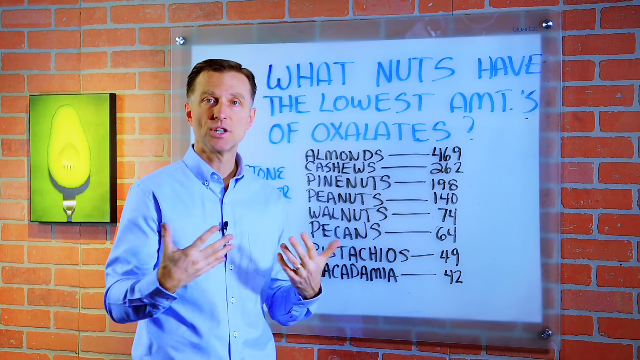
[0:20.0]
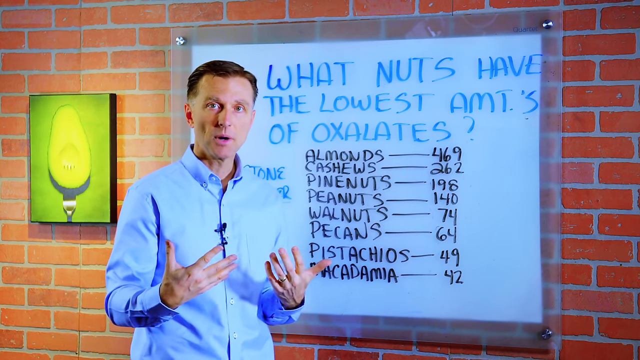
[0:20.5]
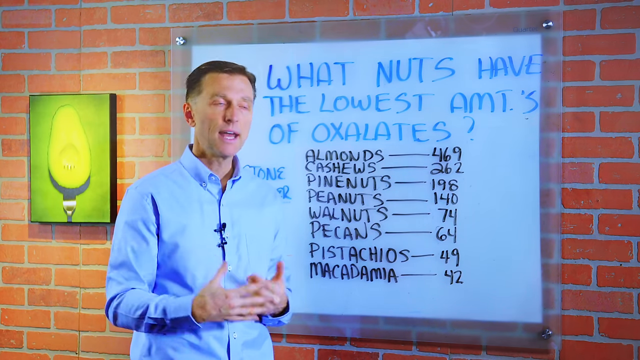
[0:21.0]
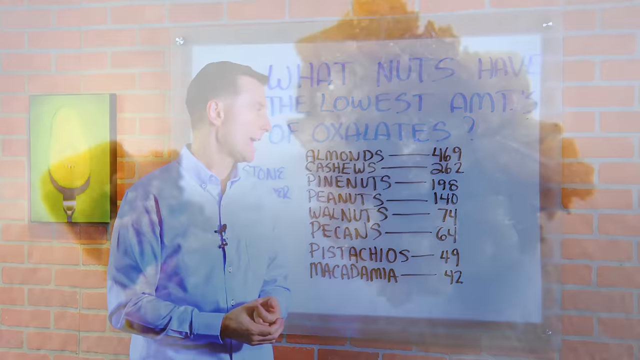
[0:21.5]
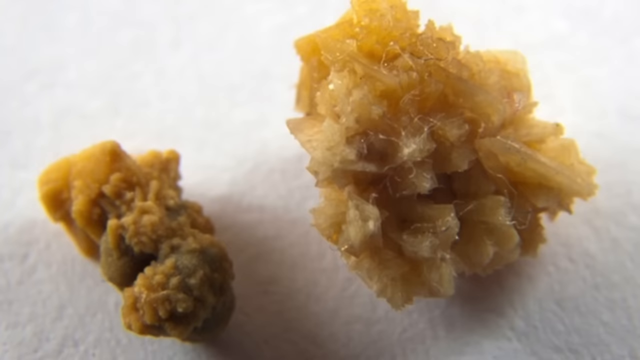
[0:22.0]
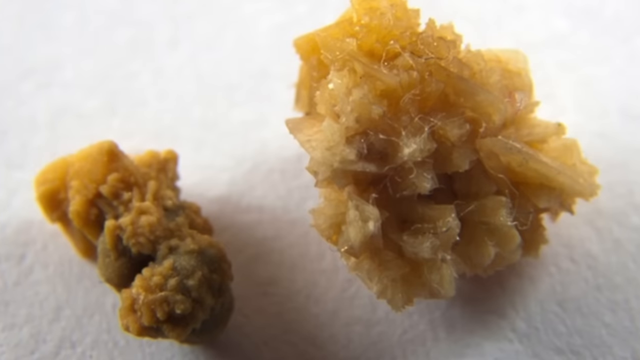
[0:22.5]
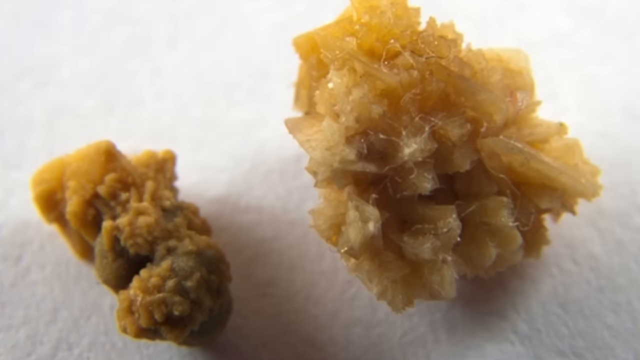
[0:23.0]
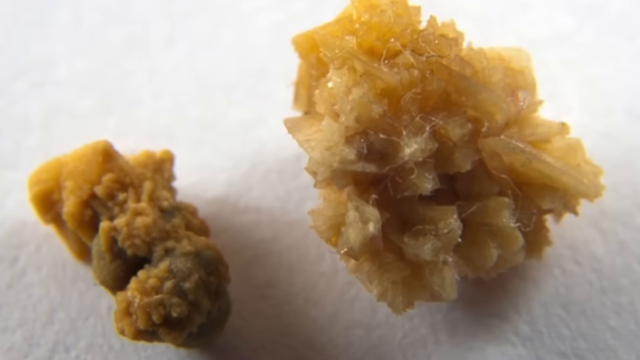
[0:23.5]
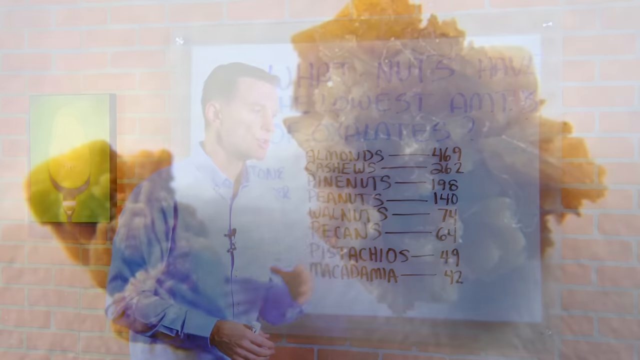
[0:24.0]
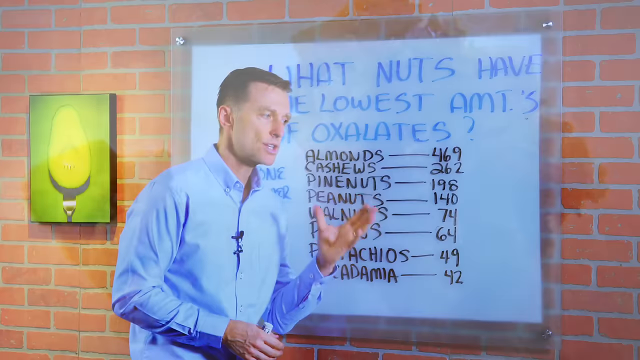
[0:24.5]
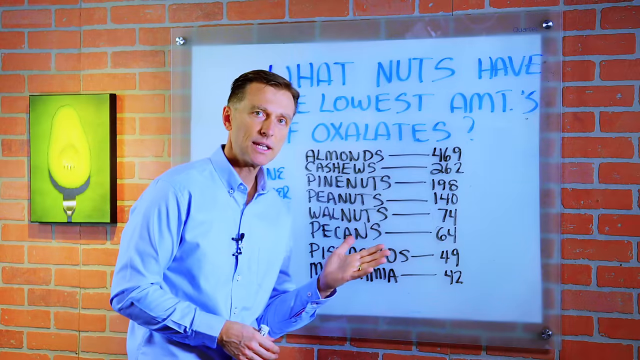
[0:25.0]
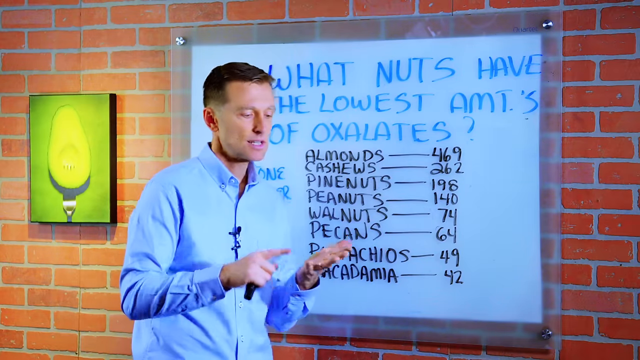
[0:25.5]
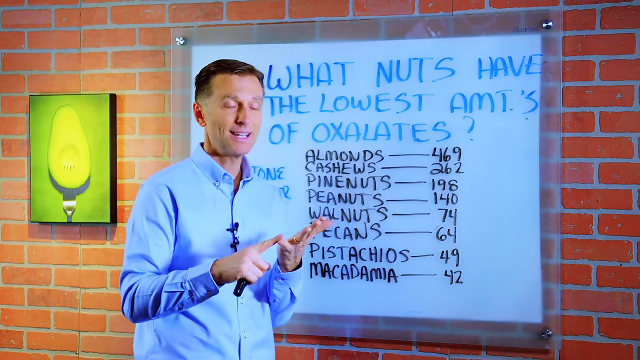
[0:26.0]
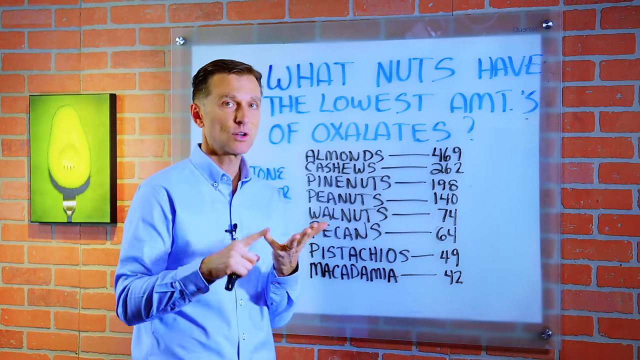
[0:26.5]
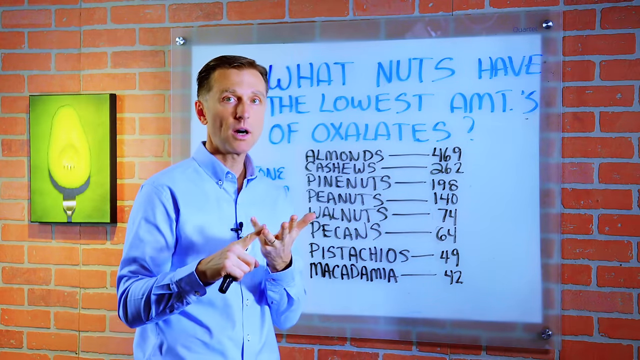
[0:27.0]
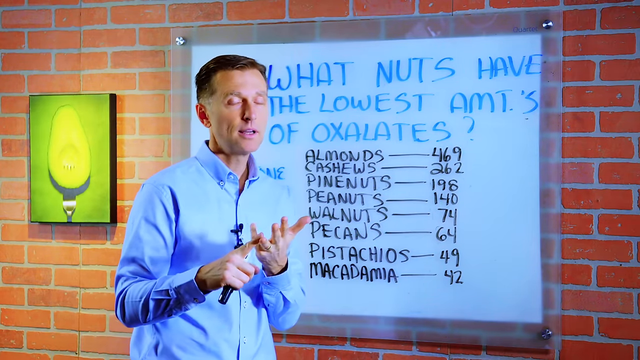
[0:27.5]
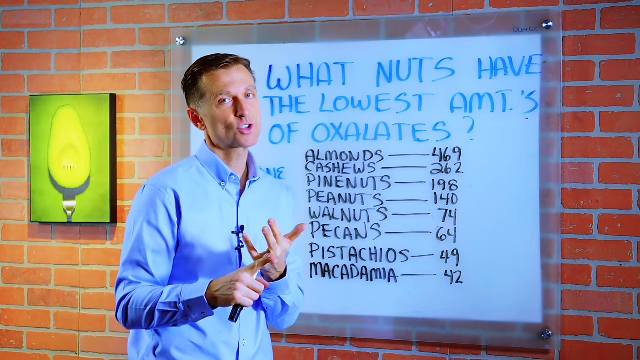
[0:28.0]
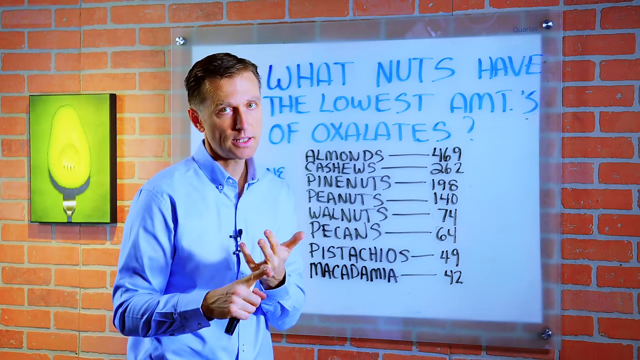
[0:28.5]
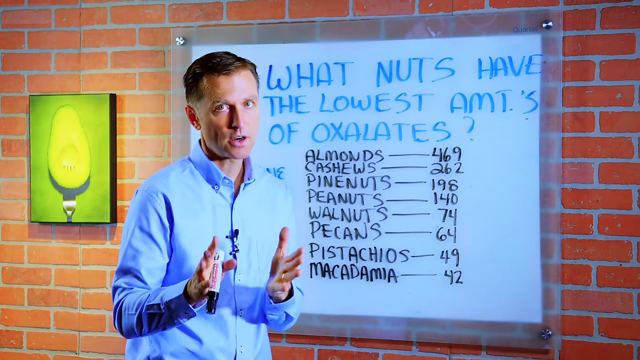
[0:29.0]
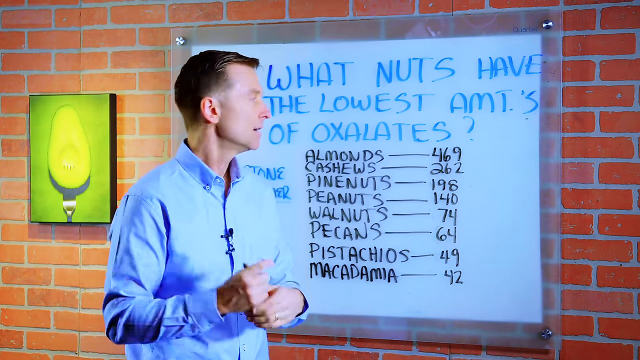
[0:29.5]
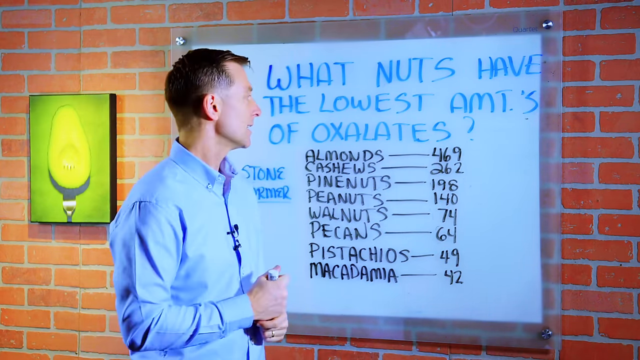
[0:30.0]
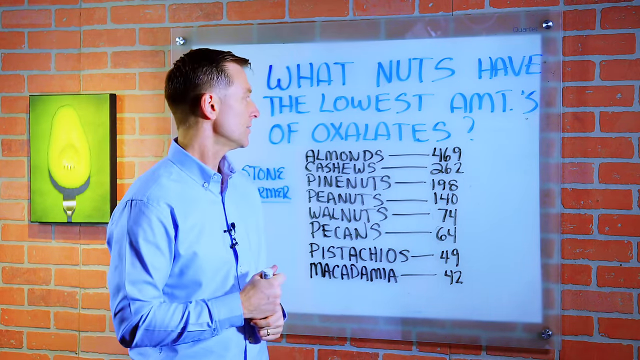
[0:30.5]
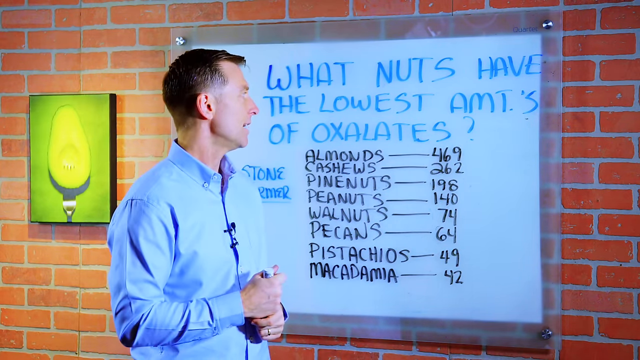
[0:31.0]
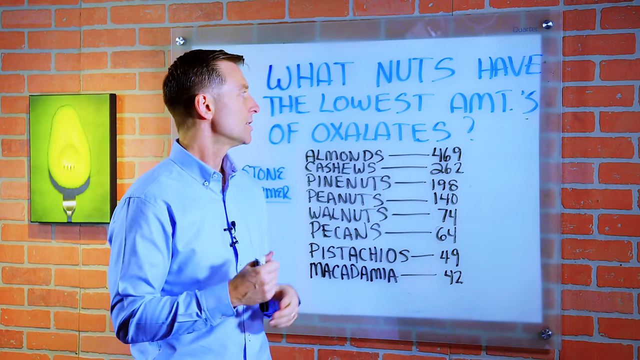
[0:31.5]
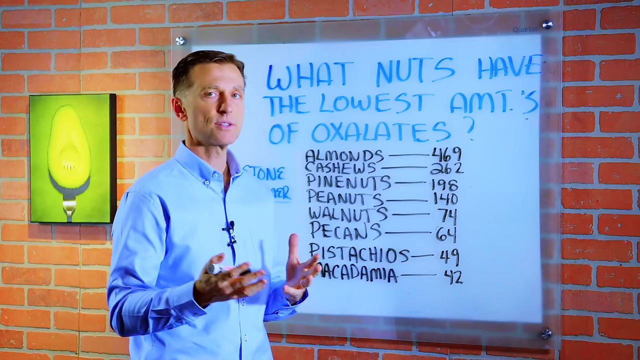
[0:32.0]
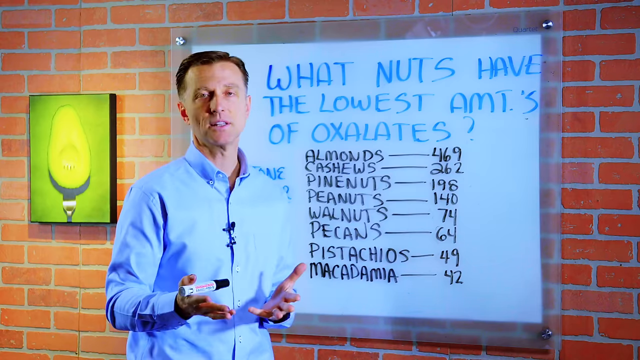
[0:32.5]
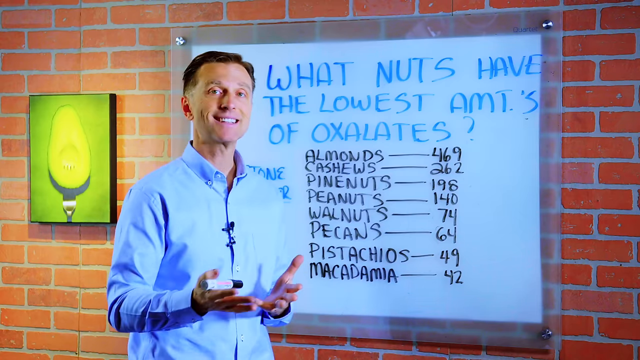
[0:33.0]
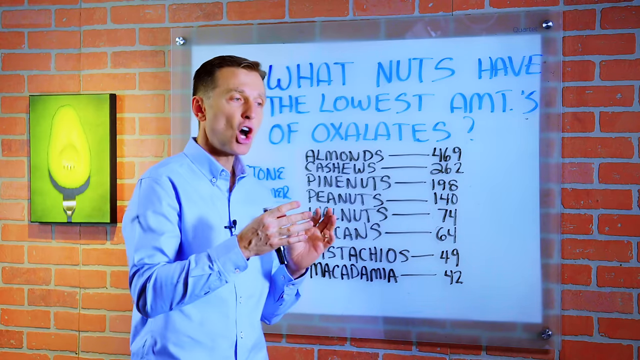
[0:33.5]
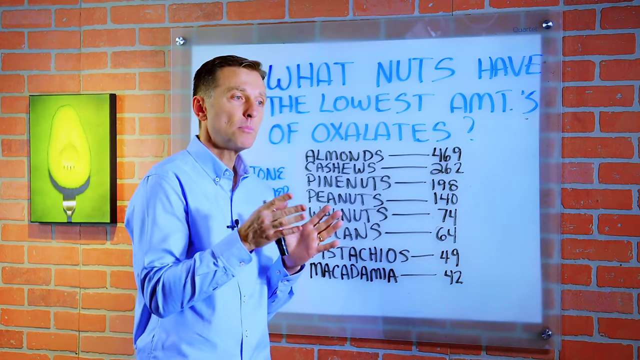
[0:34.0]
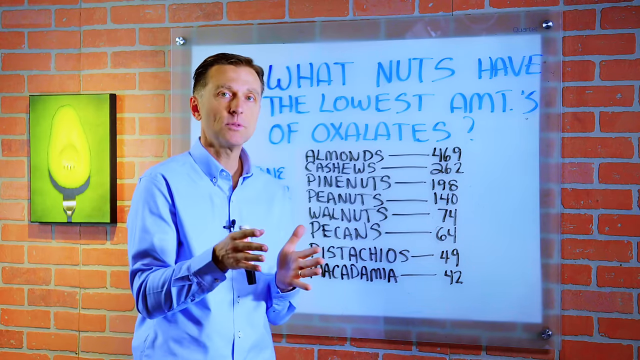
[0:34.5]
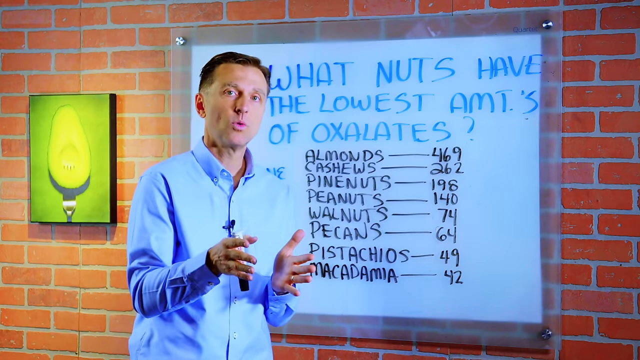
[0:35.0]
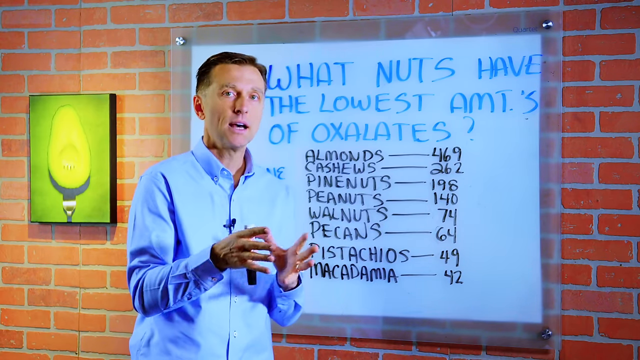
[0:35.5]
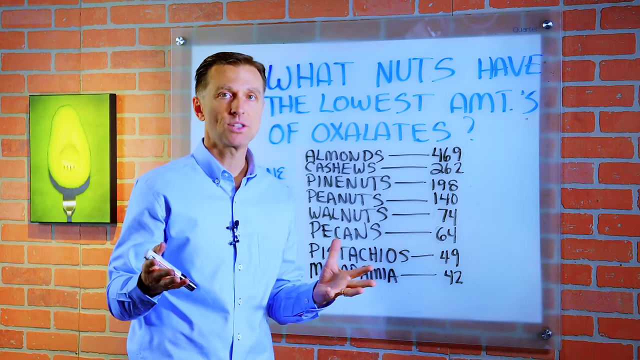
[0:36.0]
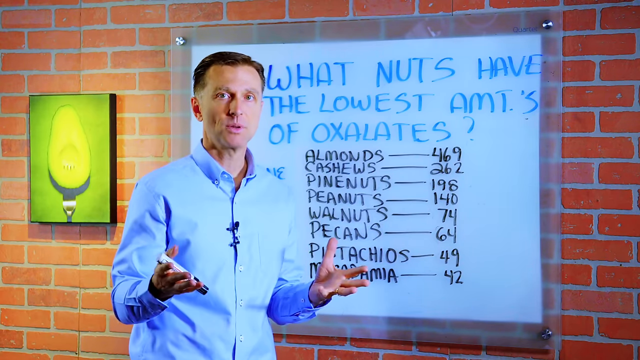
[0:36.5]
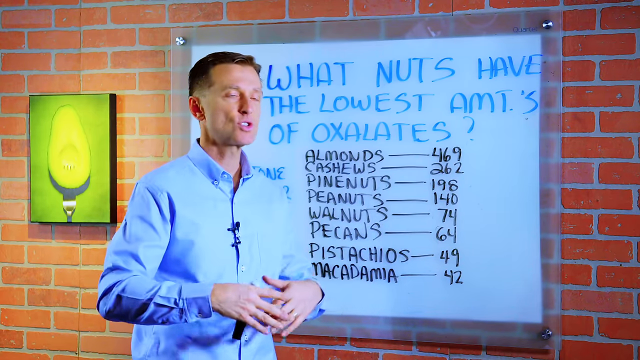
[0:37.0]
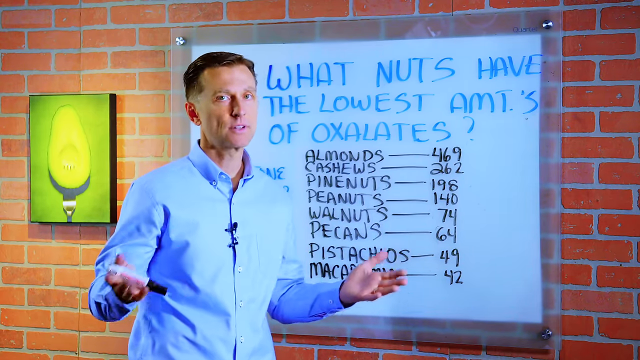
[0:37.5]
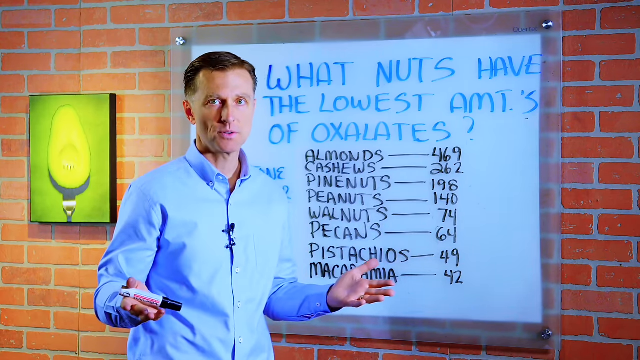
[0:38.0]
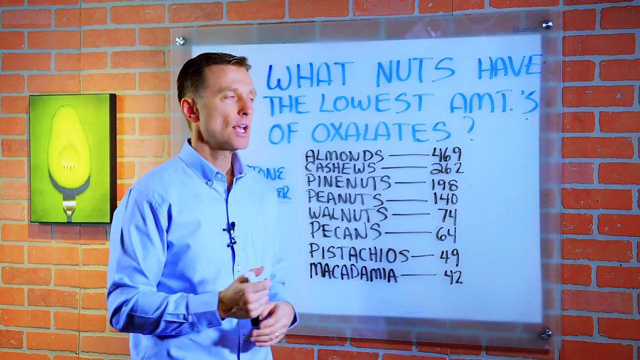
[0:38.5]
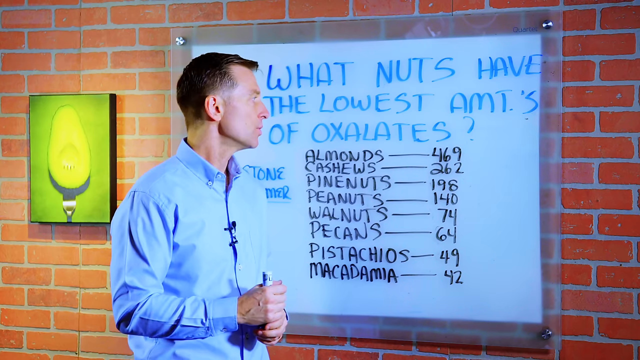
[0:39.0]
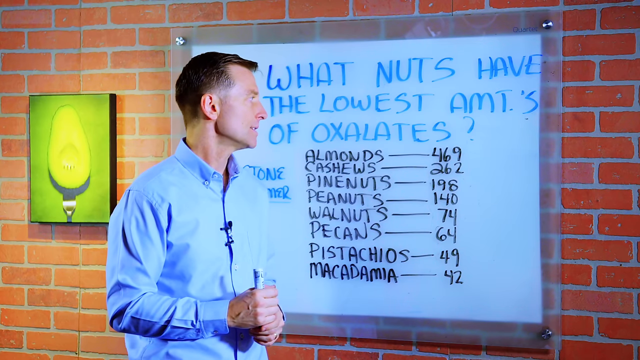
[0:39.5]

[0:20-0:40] The same scene continues with the middle-aged man, possibly a doctor, nutritionist or dietician, and his list of nuts with the lowest amounts of oxalates: almonds with 469, cashews with 262, pine nuts with 198, peanuts with 140, walnuts with 74, pecans with 64, pistachios with 49, and macadamia with 42. There is also a close-up shot of something unidentified, possibly one of the nuts.